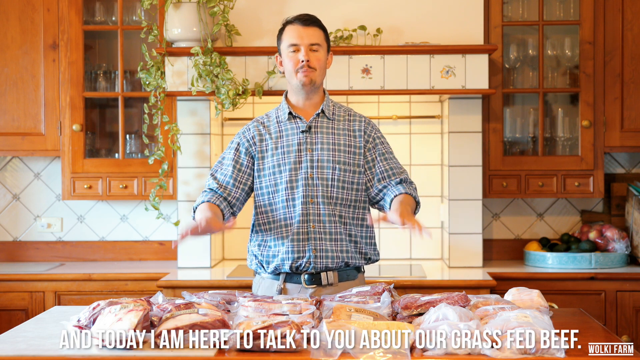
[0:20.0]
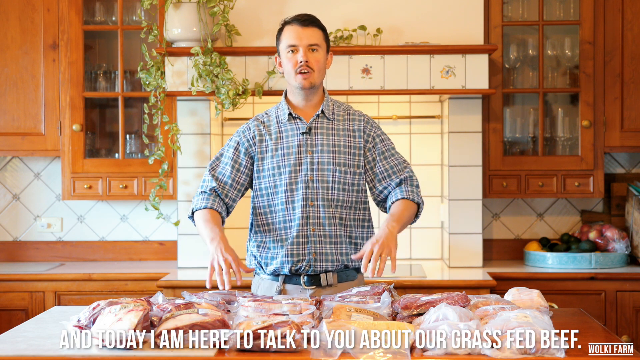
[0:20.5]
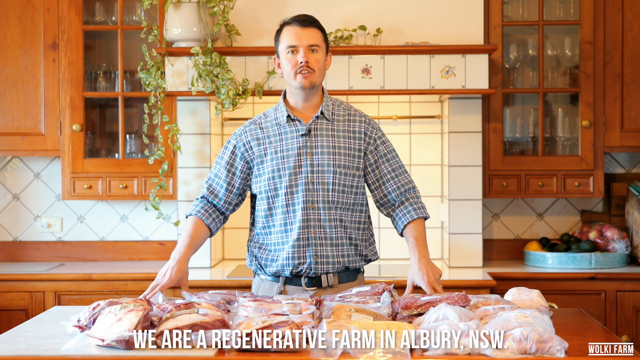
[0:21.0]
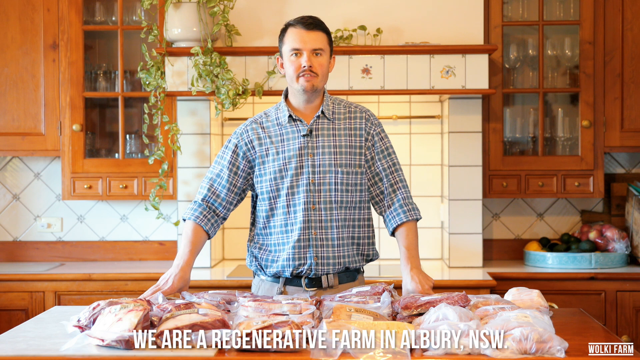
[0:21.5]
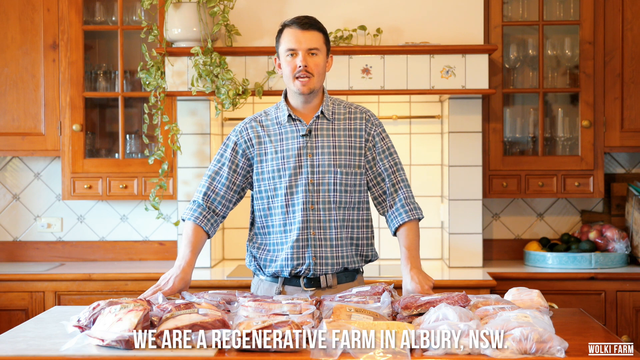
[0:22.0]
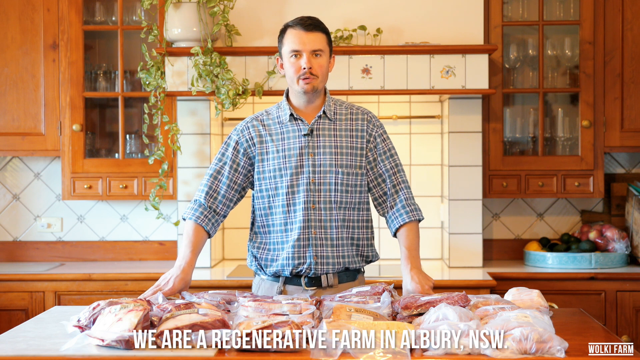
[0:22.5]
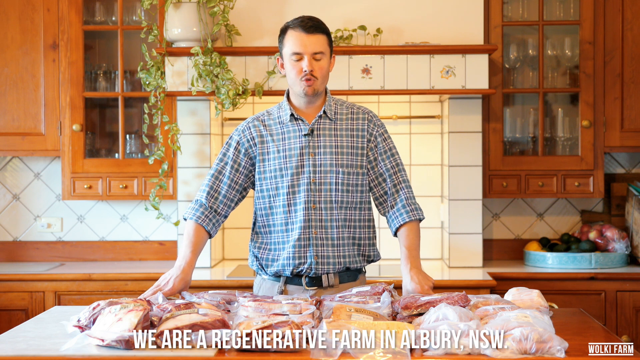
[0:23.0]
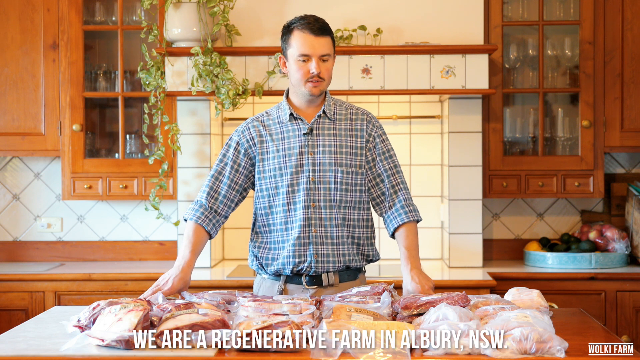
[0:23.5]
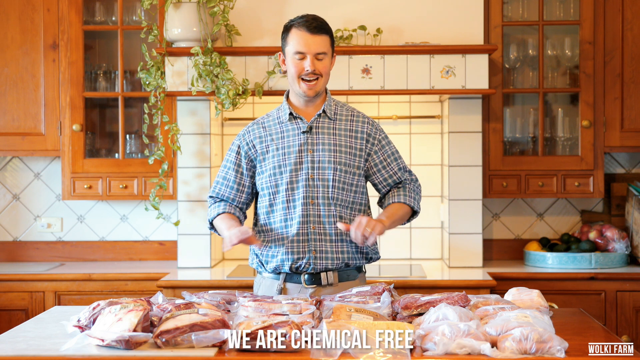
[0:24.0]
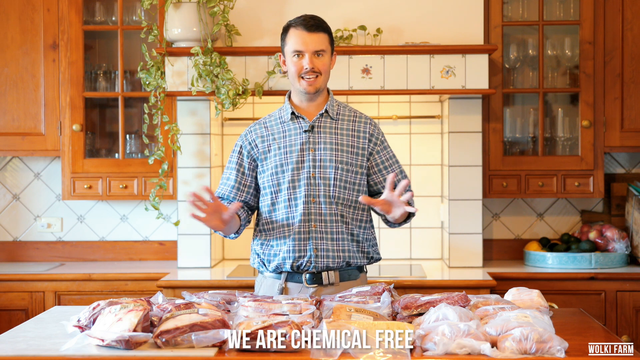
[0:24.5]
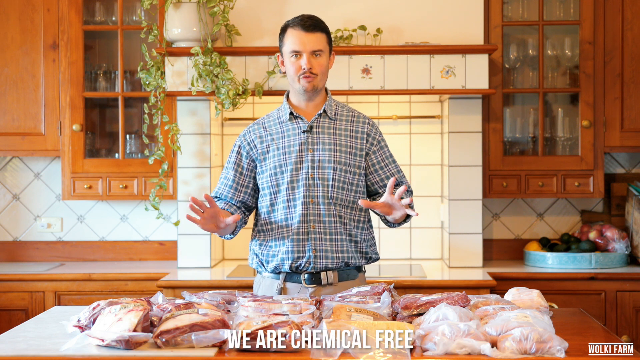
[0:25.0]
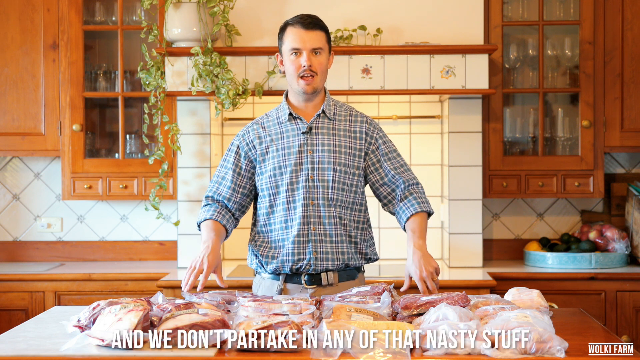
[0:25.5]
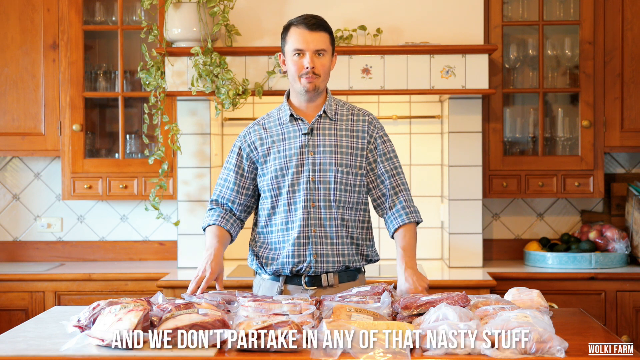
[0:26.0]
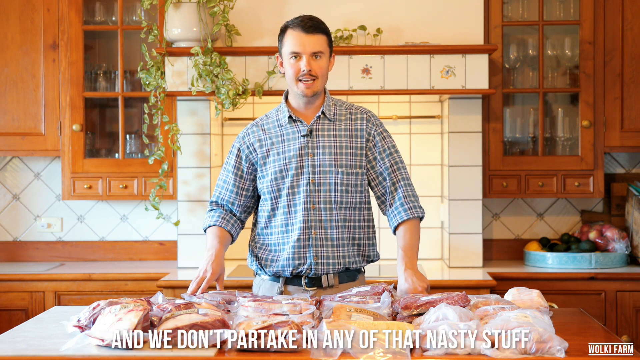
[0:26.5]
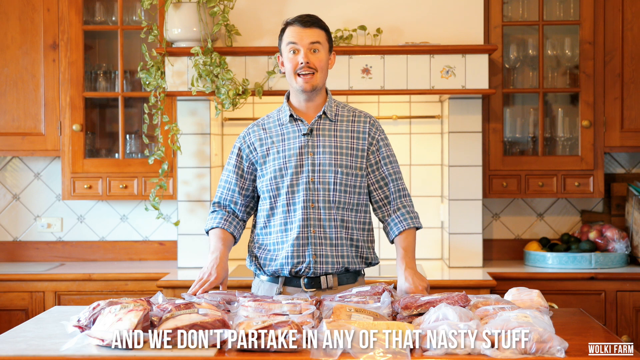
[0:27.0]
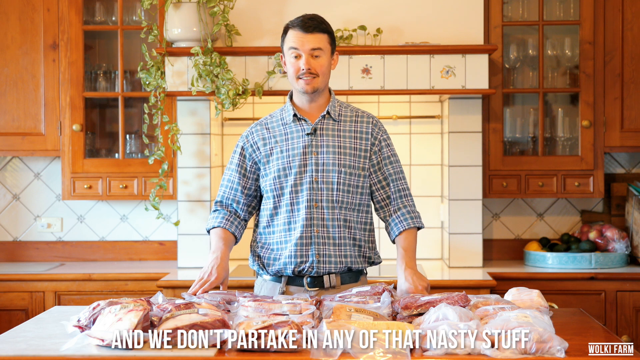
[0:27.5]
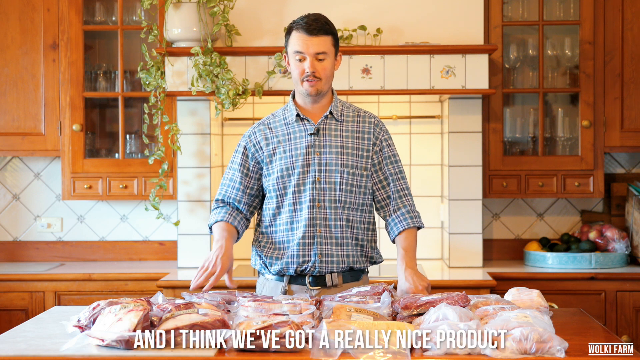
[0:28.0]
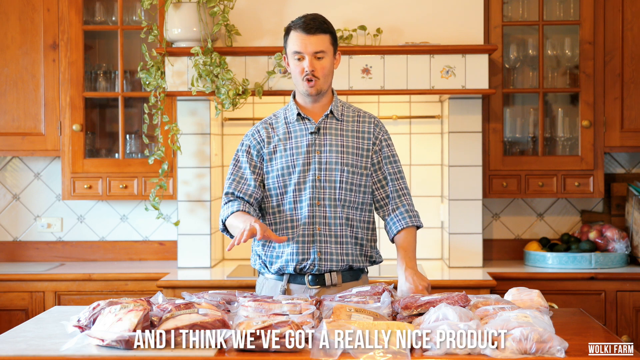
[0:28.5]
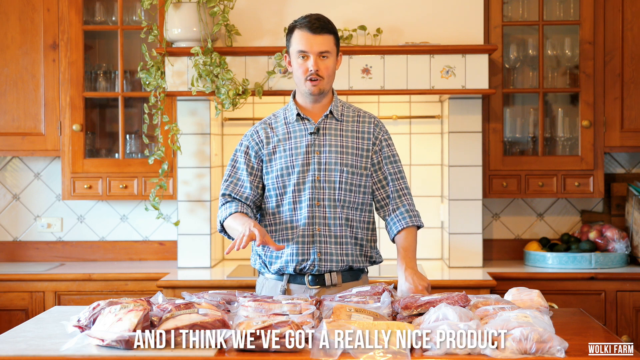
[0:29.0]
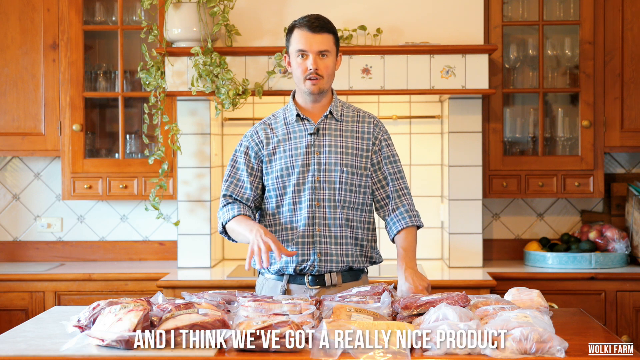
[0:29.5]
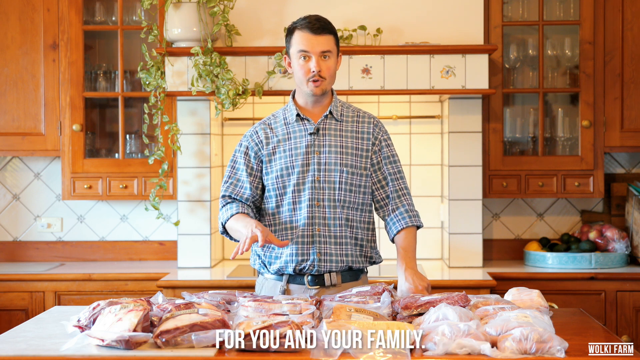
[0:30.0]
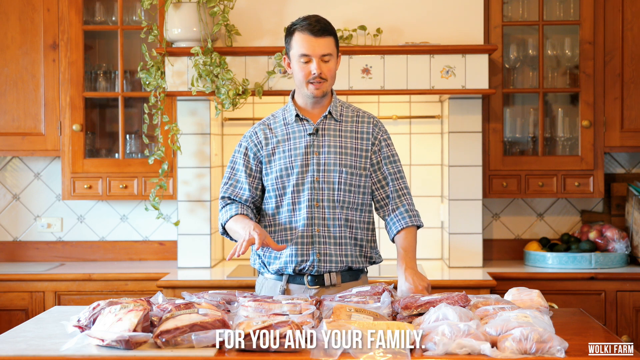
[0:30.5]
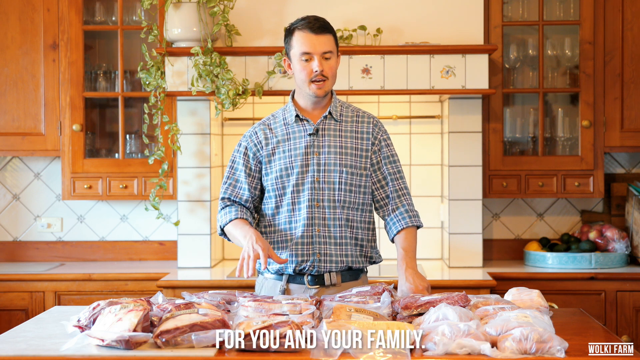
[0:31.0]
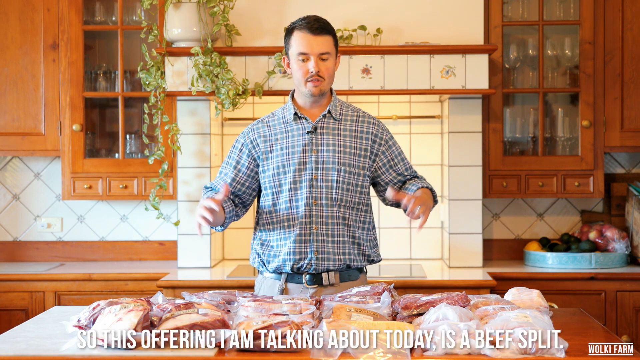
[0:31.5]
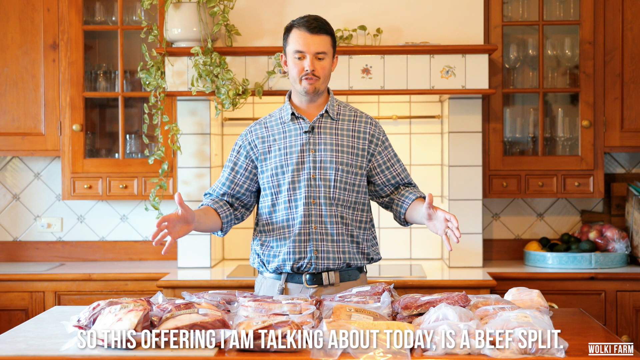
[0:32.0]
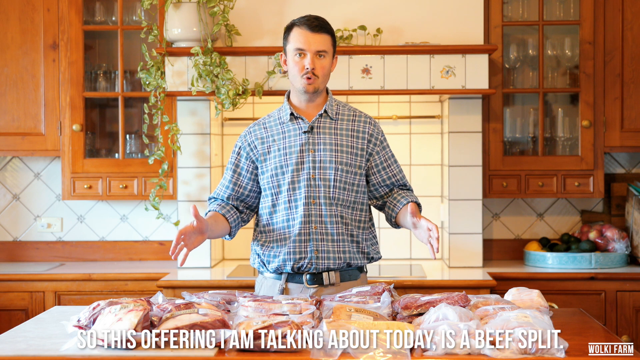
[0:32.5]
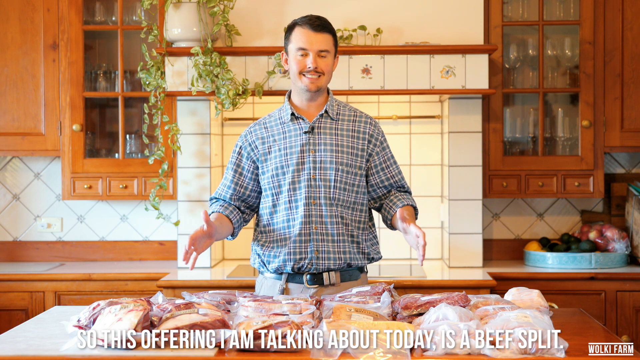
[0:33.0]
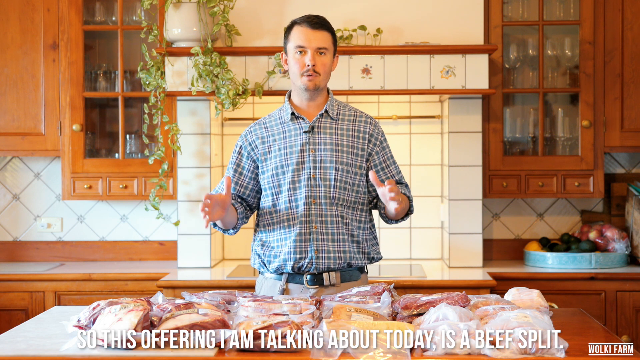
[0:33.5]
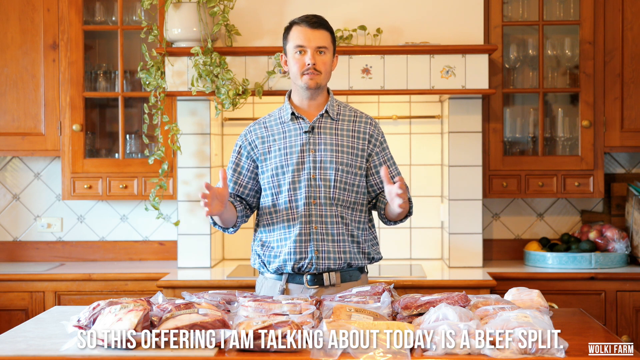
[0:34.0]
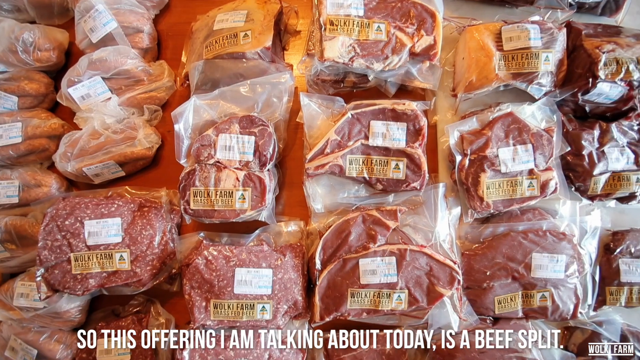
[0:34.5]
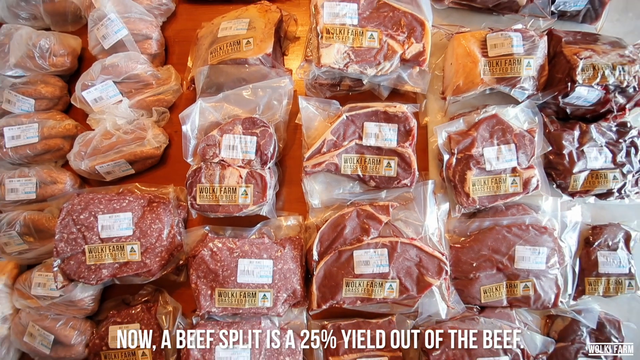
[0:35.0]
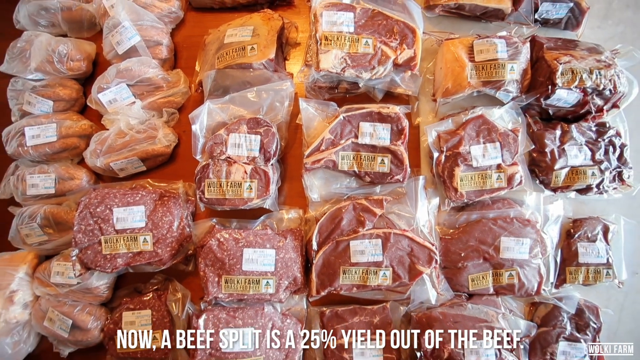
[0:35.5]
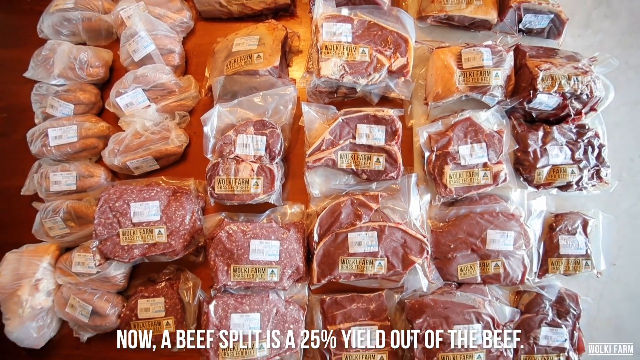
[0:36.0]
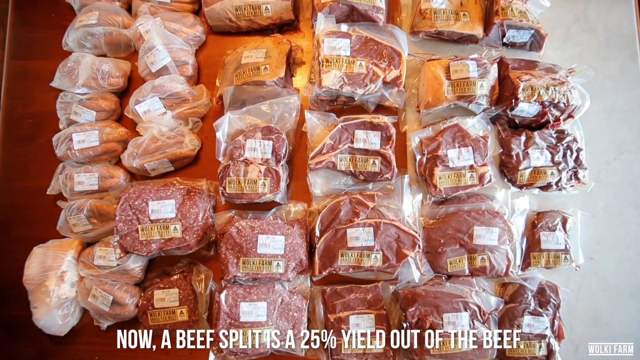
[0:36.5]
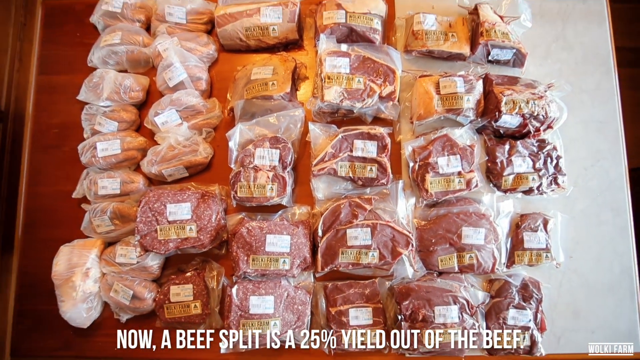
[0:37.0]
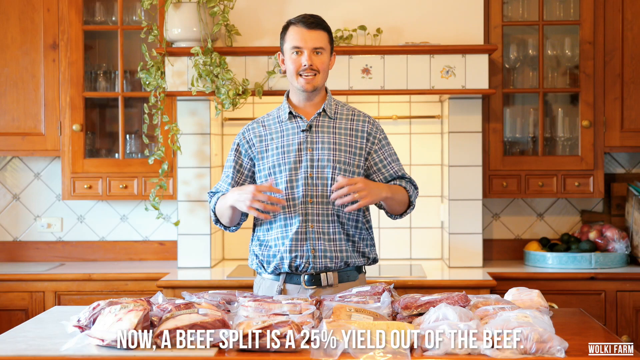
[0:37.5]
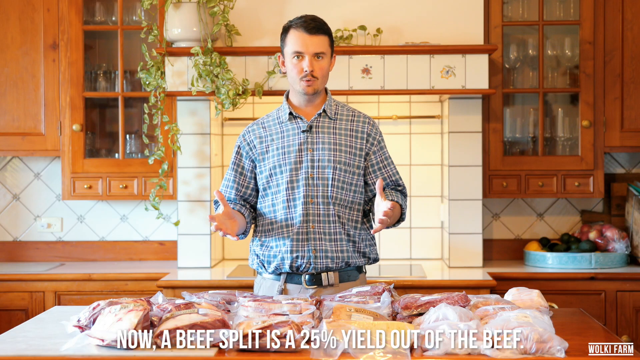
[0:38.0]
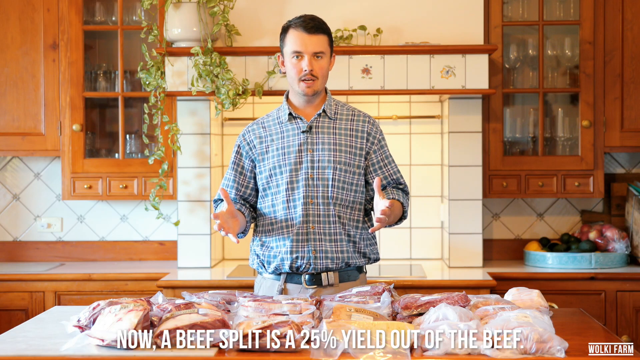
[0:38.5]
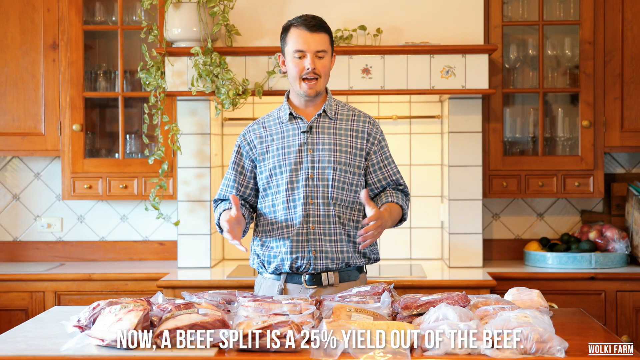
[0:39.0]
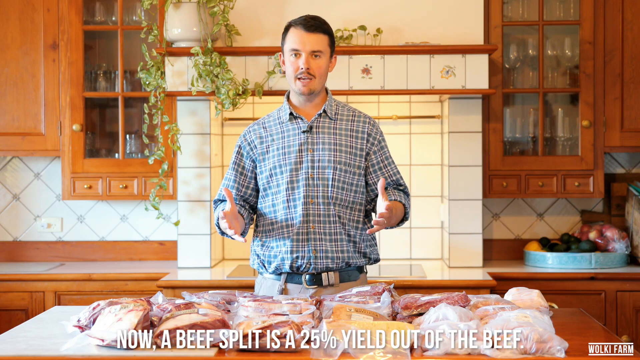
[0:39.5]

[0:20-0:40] The caption reads "we are a regenerative farm in Albany, we are chemical free and we don't partake in any of that nasty stuff." The captions go by quickly. Jacob gestures a little at the packages of meat on the counter, apparently the grass-fed beef he is about to talk about. He says, "I think we've got a really nice product for you and your family. So this offering I'm talking about today is beef split. Now a beef split is 25% yield of the beef."